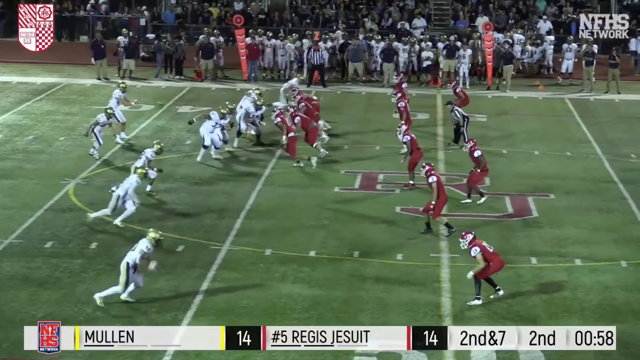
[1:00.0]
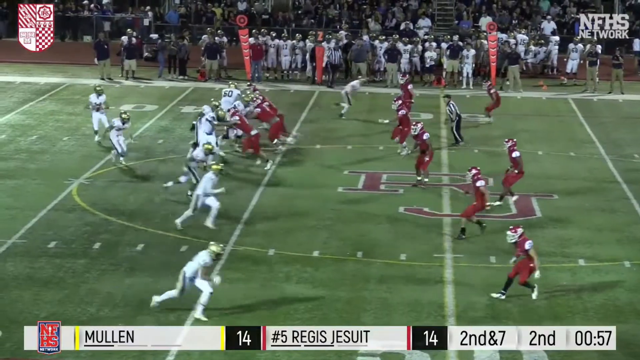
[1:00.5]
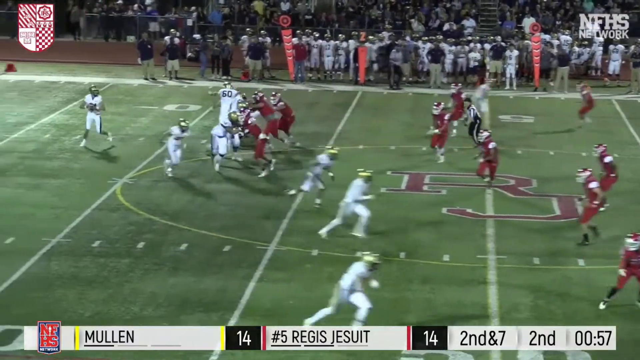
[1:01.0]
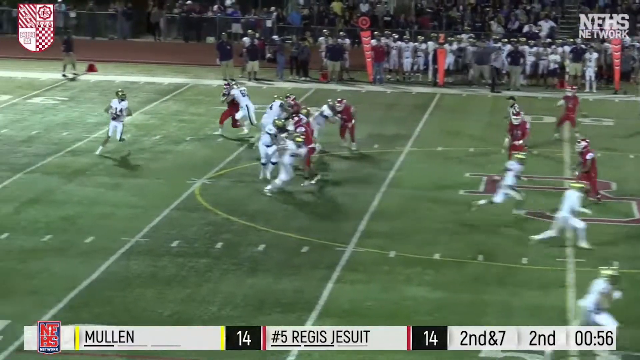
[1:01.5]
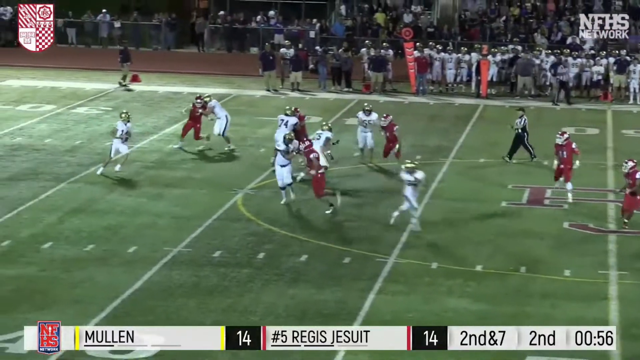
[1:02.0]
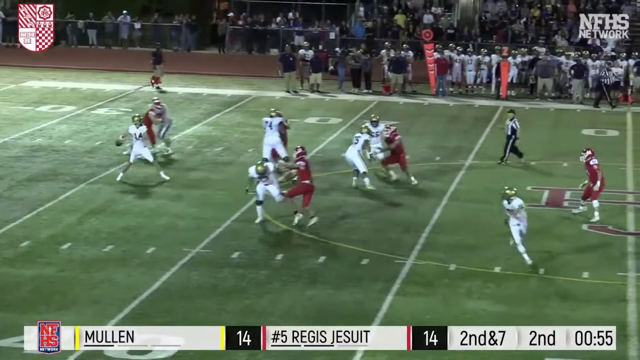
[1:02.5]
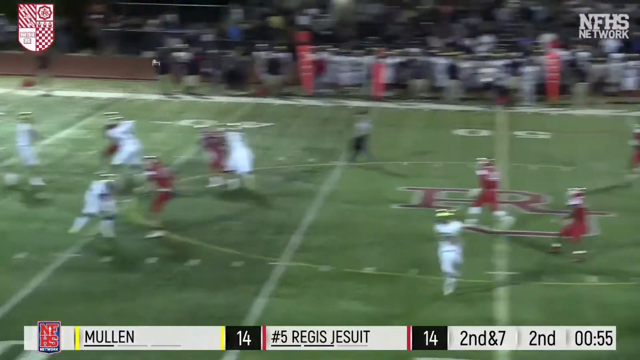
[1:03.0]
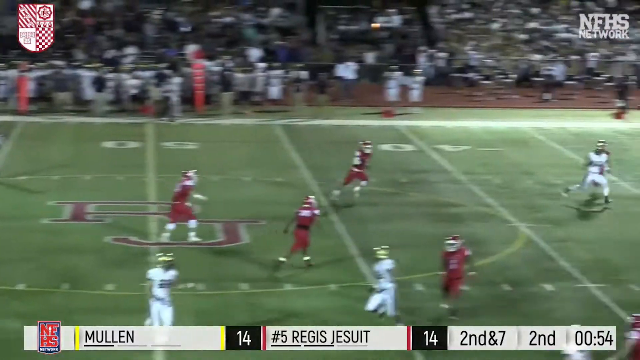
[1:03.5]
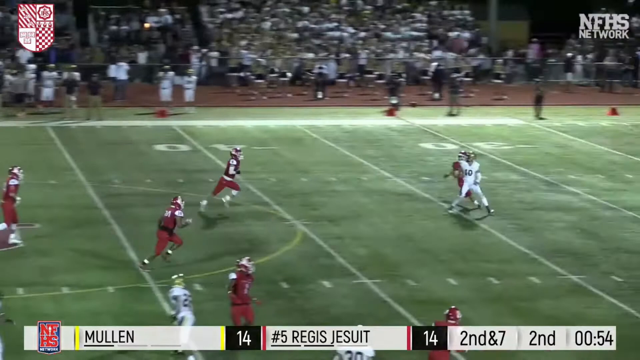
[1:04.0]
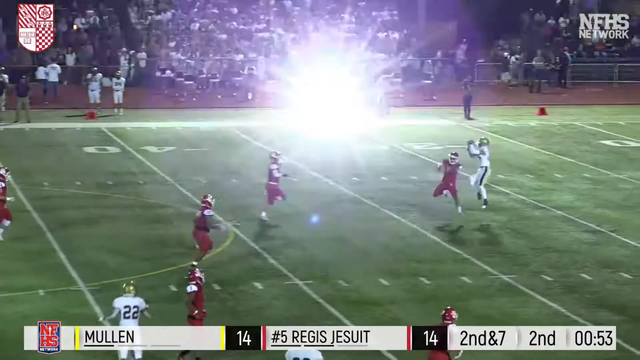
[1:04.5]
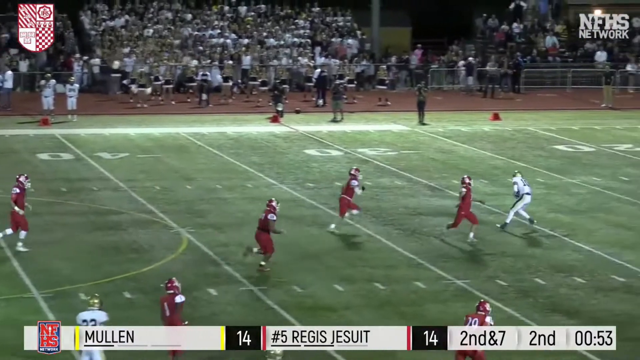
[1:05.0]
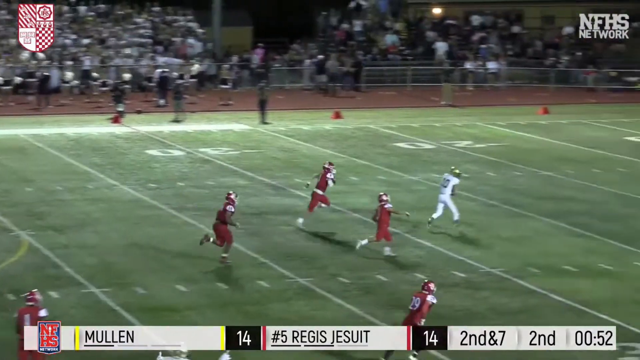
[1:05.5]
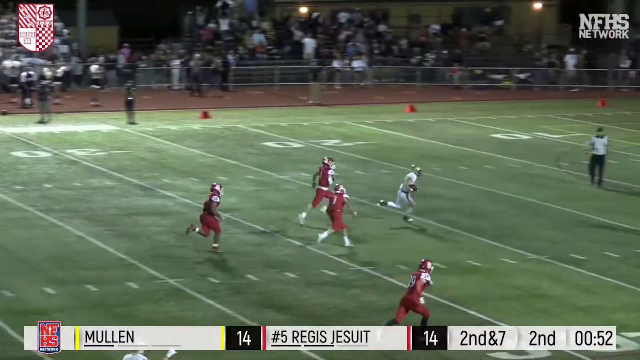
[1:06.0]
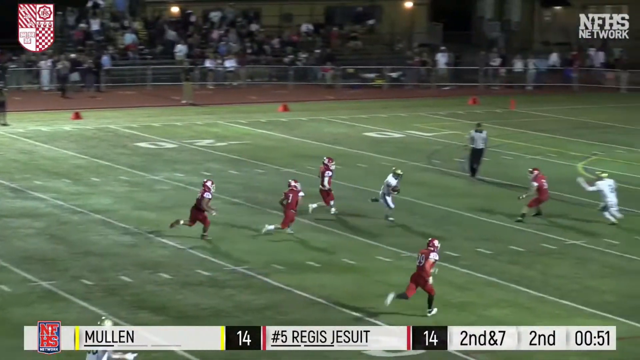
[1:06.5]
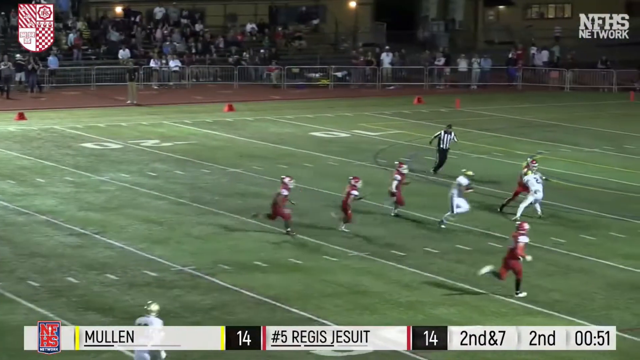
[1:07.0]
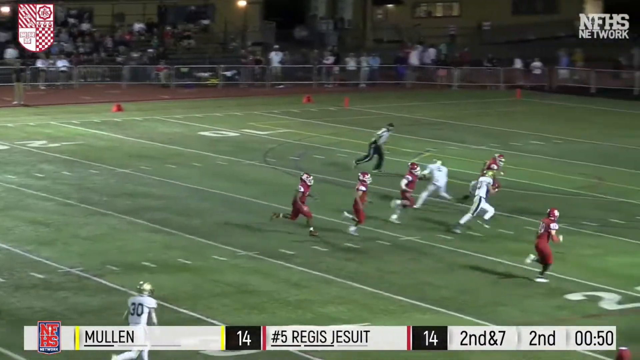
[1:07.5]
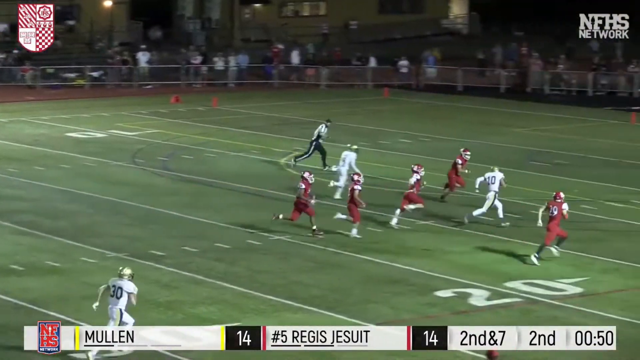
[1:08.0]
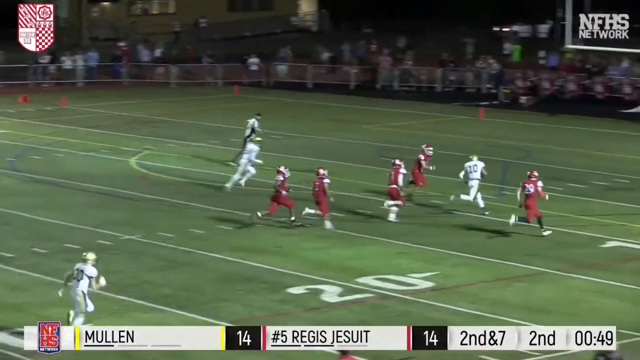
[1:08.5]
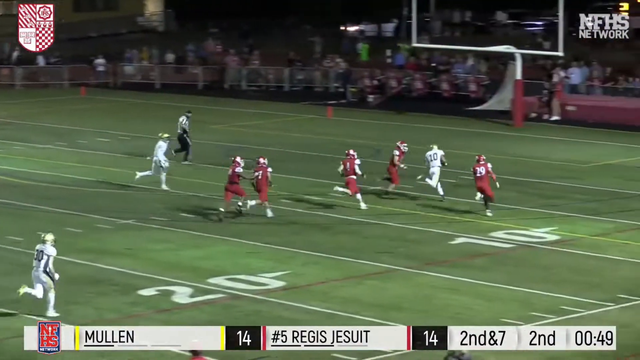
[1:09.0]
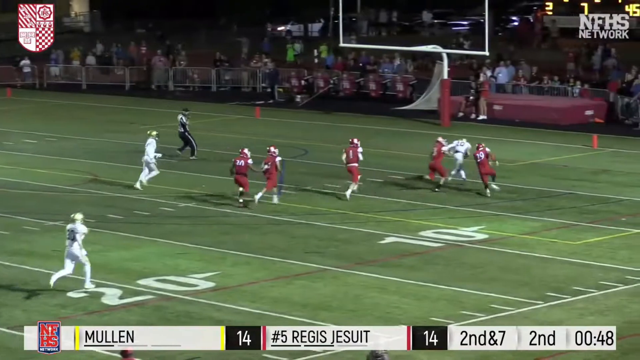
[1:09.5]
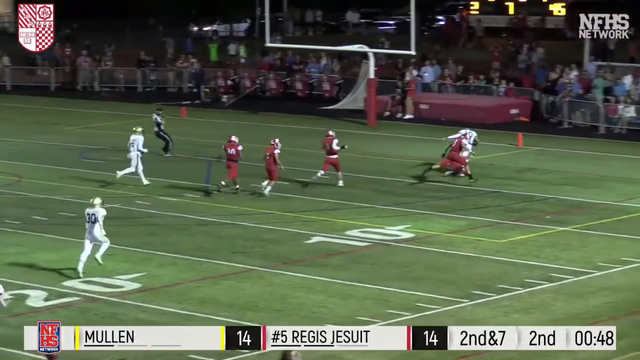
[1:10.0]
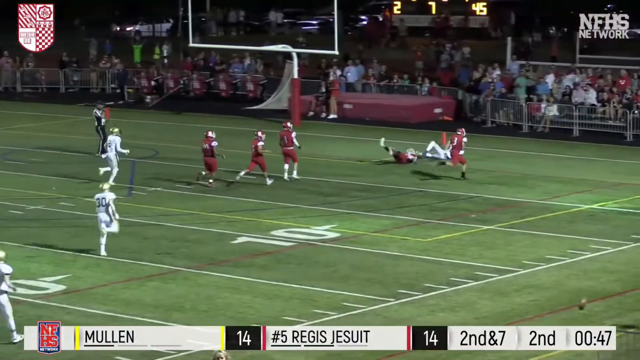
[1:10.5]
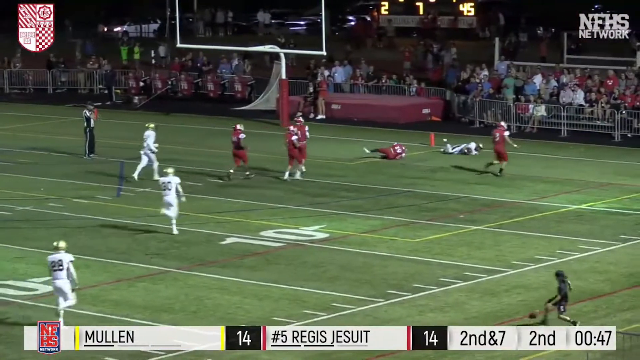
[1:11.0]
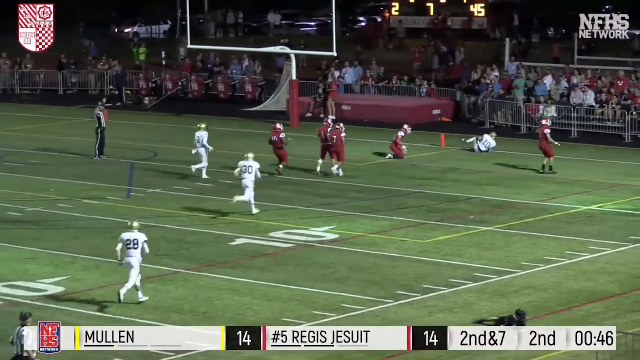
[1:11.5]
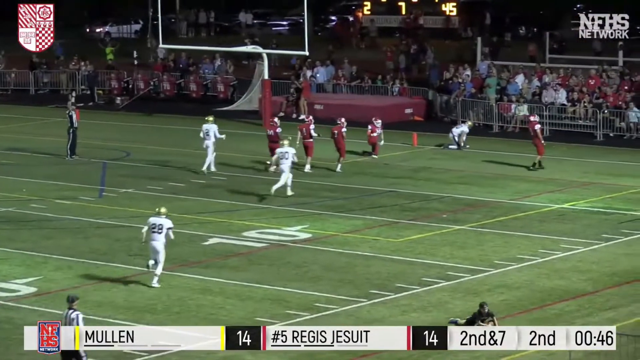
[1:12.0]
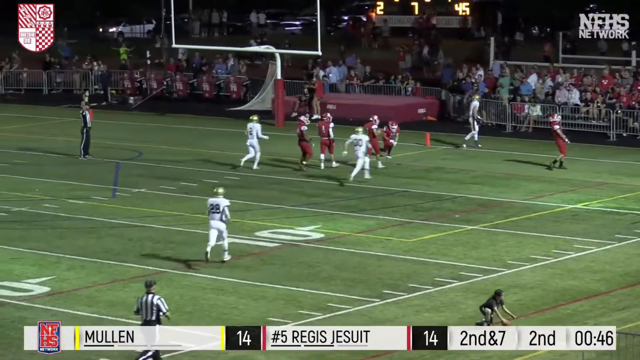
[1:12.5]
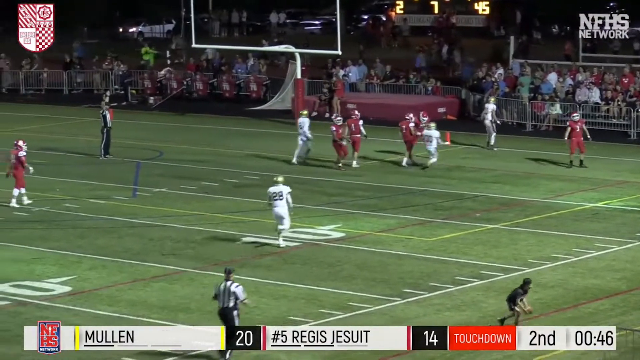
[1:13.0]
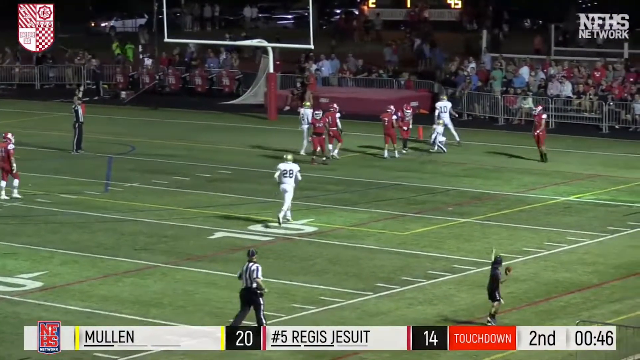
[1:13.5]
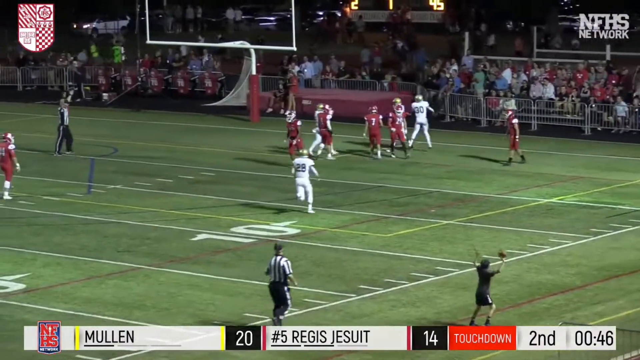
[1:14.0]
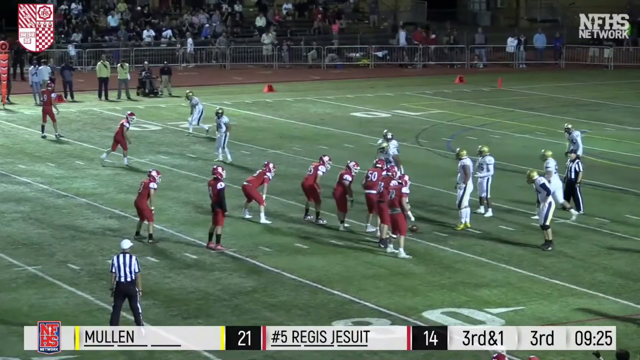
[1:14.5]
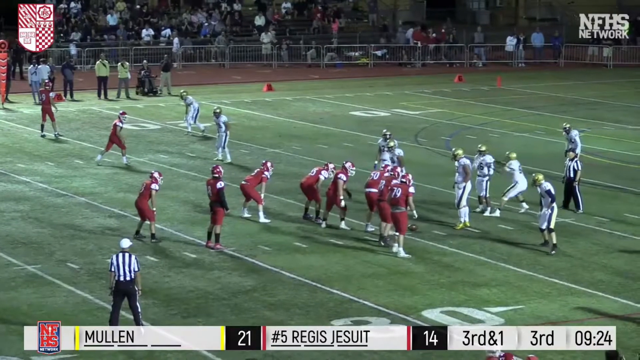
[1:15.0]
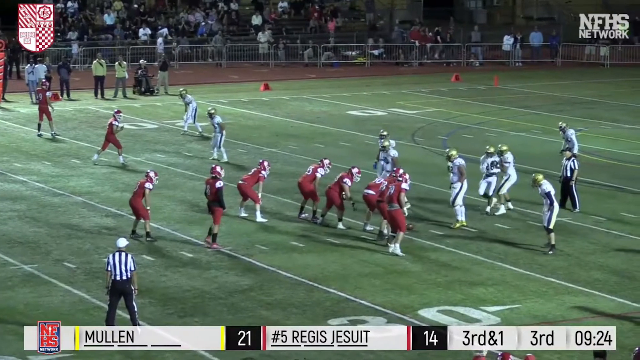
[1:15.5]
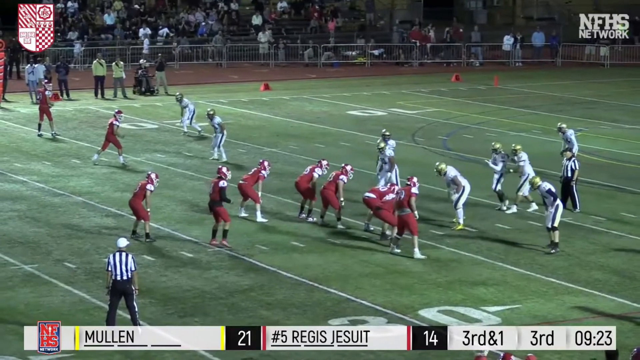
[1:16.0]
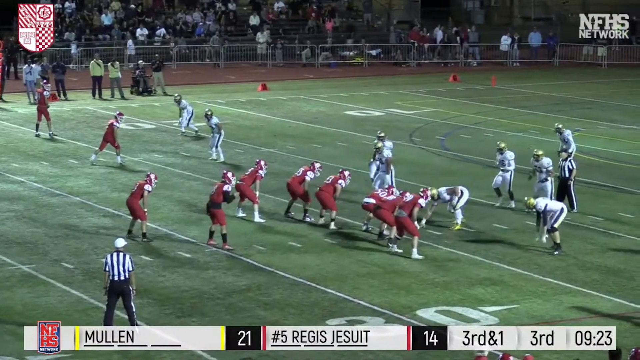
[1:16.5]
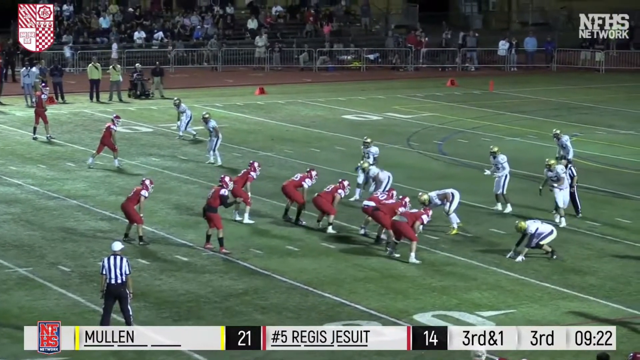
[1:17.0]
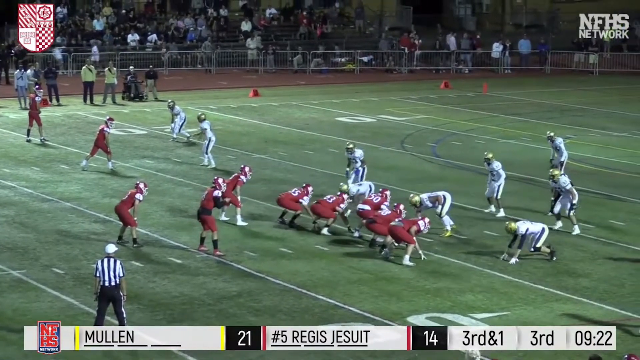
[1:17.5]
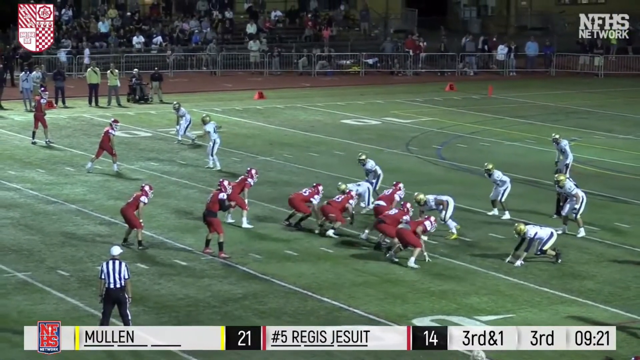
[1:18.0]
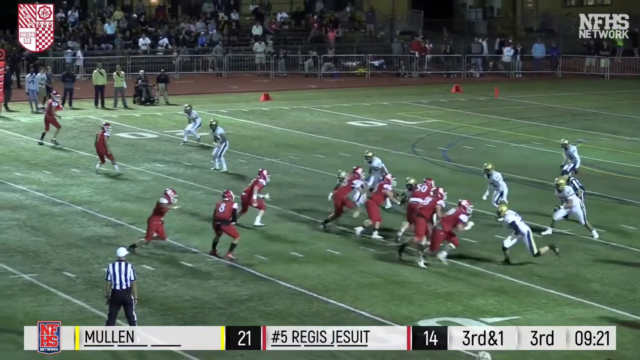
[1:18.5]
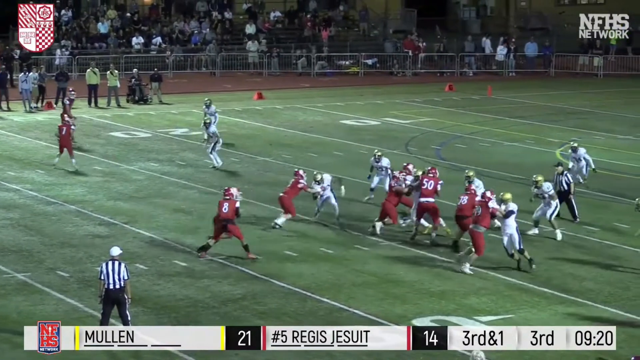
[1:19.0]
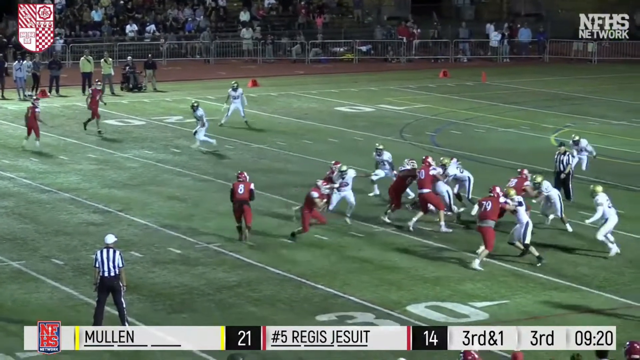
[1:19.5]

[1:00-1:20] The white-jerseyed team is on offense on the left side of the field. The quarterback hikes the ball and has it in his hands as the receivers run upfield. He rolls to the left, pauses, and throws to a receiver. A red-shirted player is right in front of the white-jerseyed receiver, but the receiver catches the ball over him, cuts to the right side of the field, and runs all the way to the end zone before being pushed by a red defender, scoring another touchdown. A new play follows with the red-shirted team on offense. It is third and one in the third quarter, with Mullen at 21 and number five Regis Jesuit at 14. The quarterback claps his hands and fakes the handoff to the running back as the shot ends.